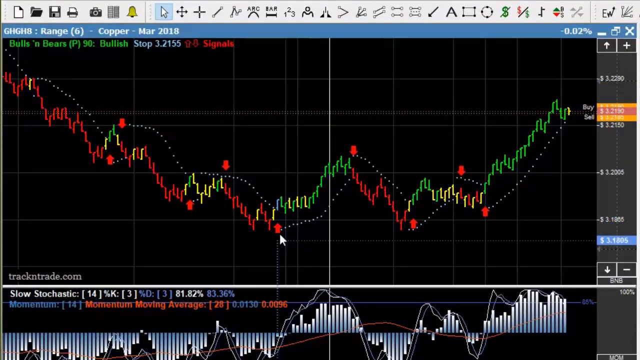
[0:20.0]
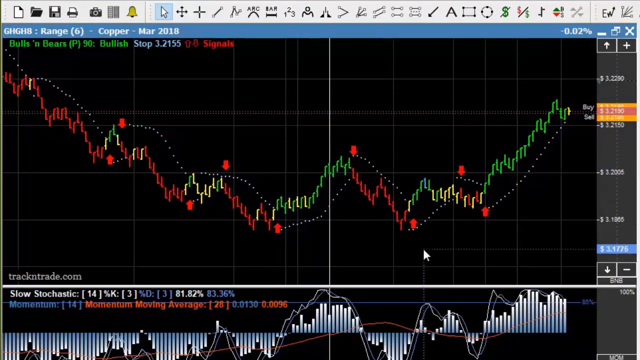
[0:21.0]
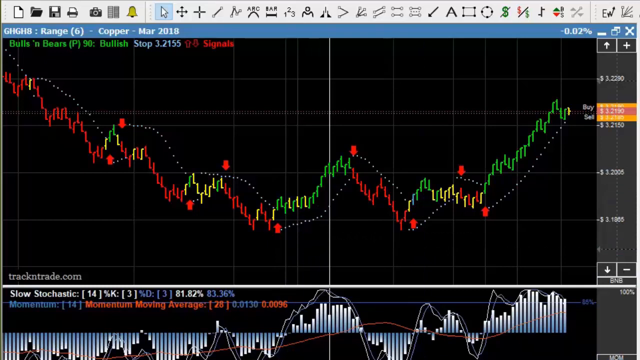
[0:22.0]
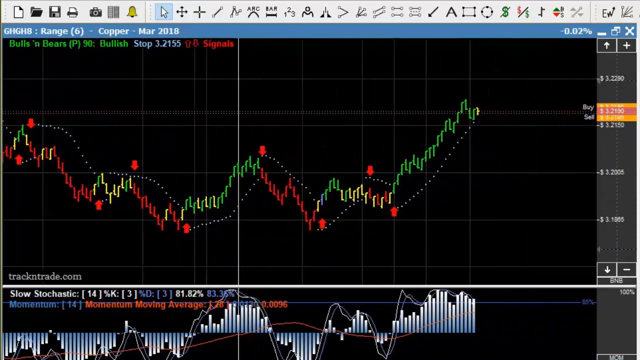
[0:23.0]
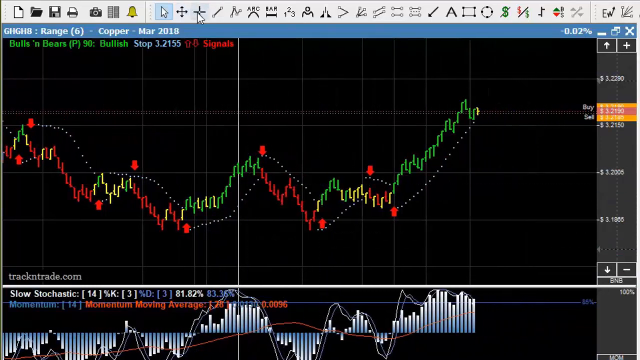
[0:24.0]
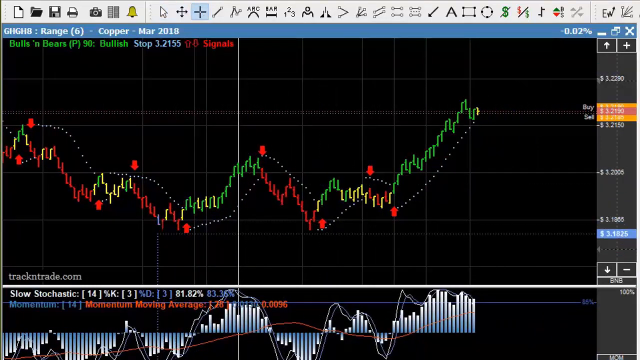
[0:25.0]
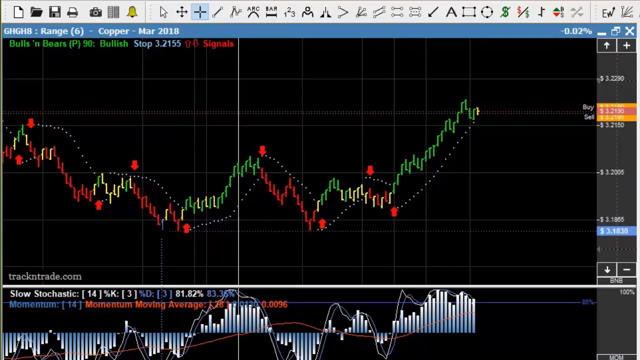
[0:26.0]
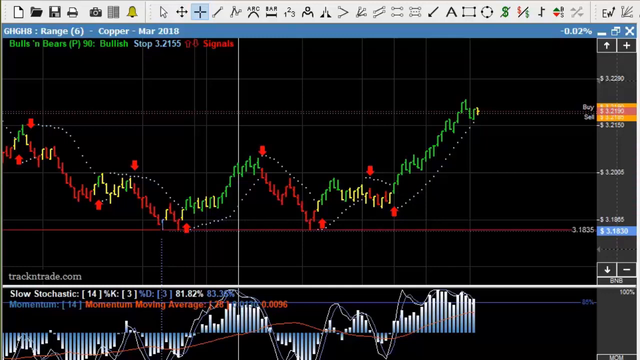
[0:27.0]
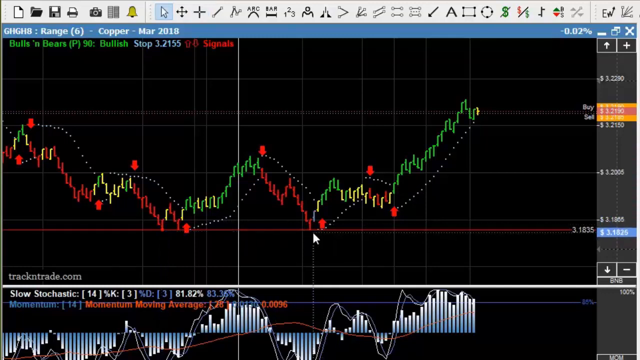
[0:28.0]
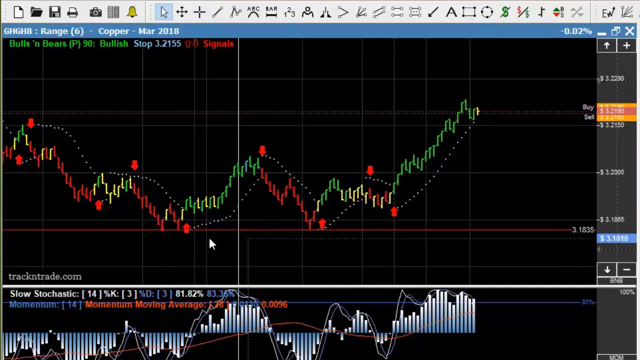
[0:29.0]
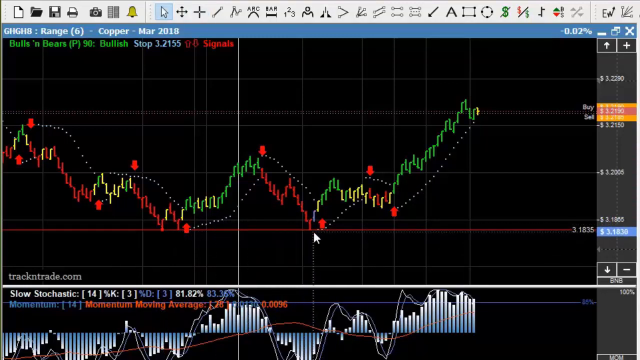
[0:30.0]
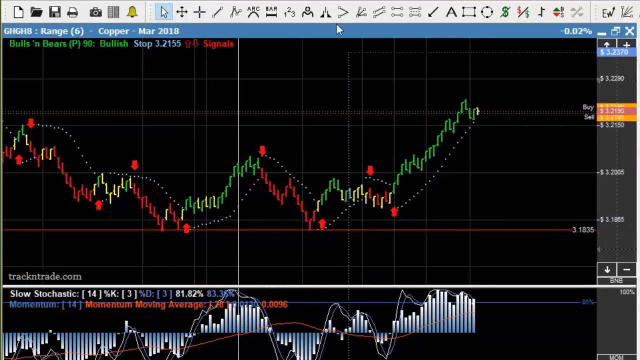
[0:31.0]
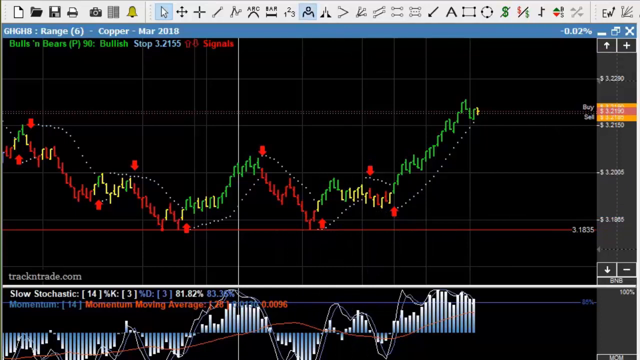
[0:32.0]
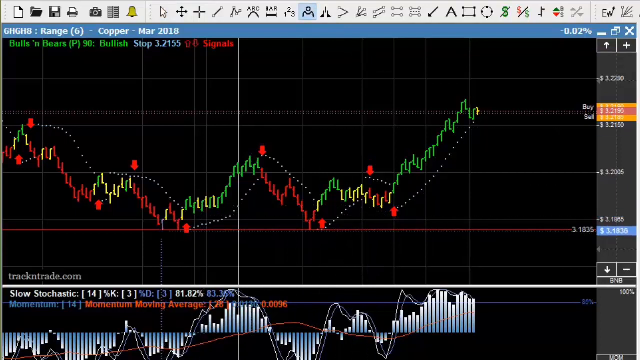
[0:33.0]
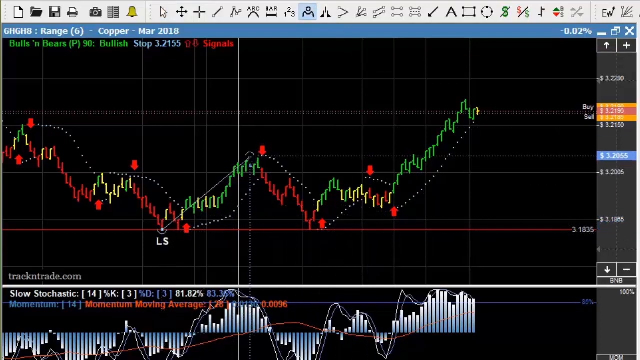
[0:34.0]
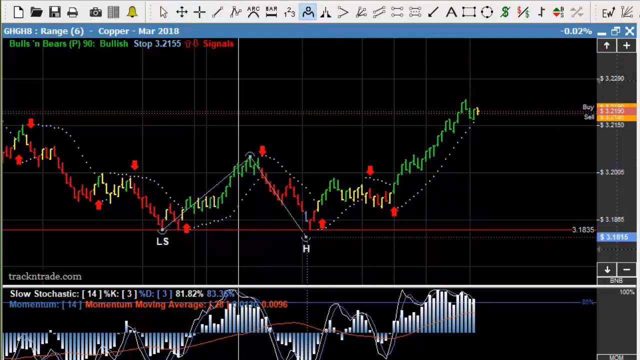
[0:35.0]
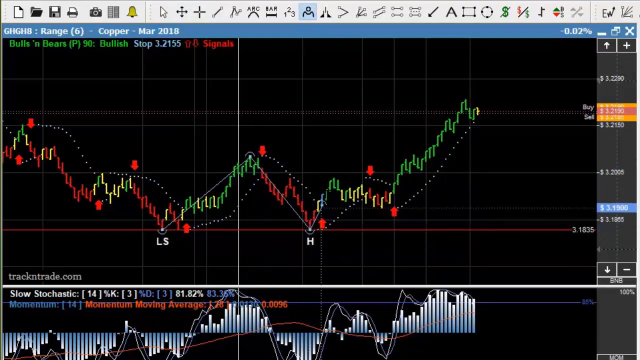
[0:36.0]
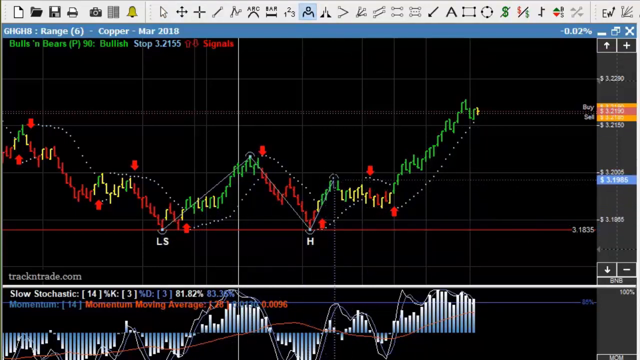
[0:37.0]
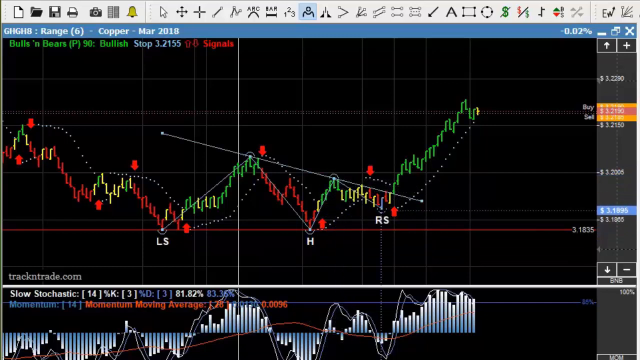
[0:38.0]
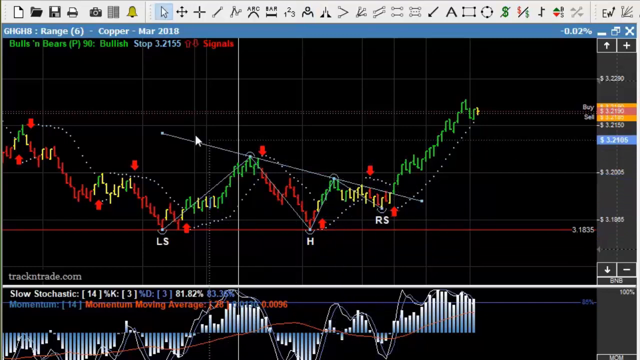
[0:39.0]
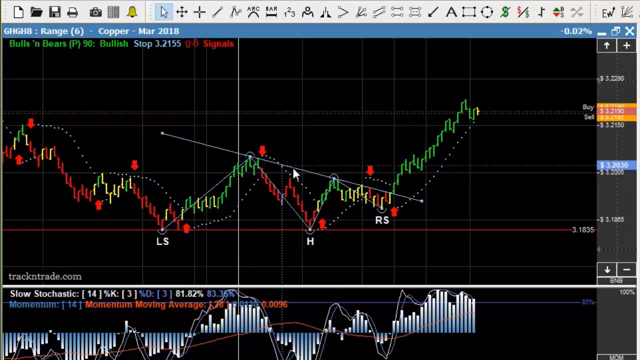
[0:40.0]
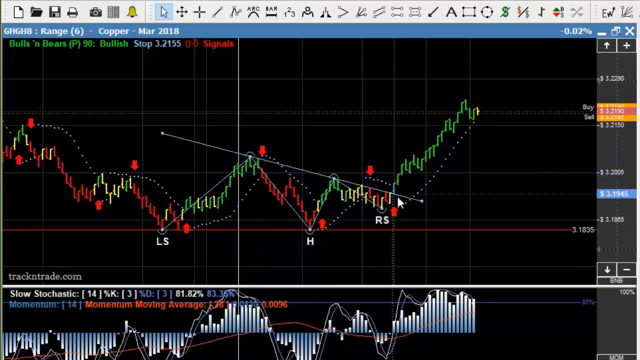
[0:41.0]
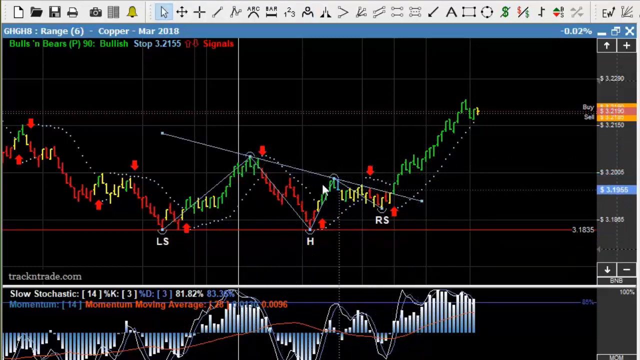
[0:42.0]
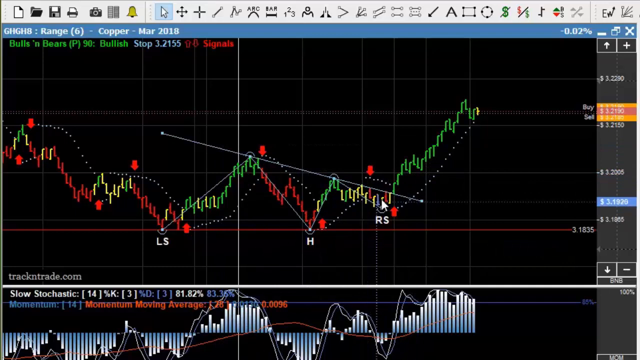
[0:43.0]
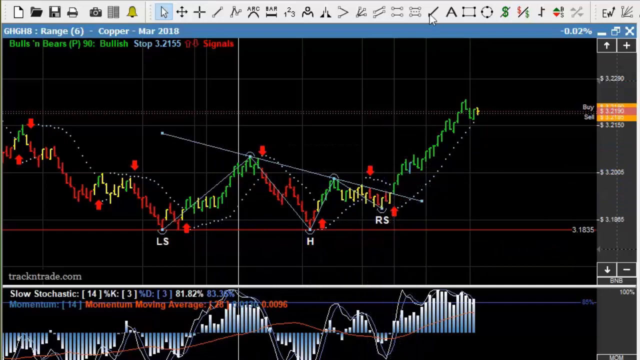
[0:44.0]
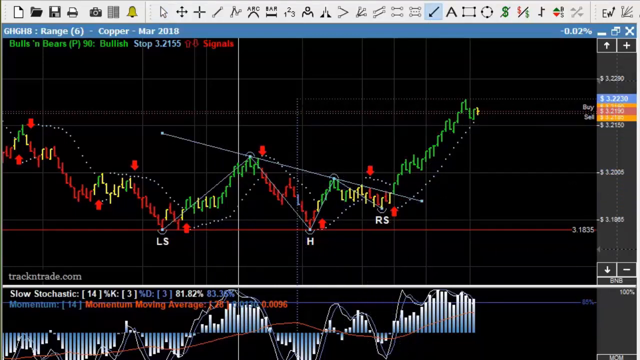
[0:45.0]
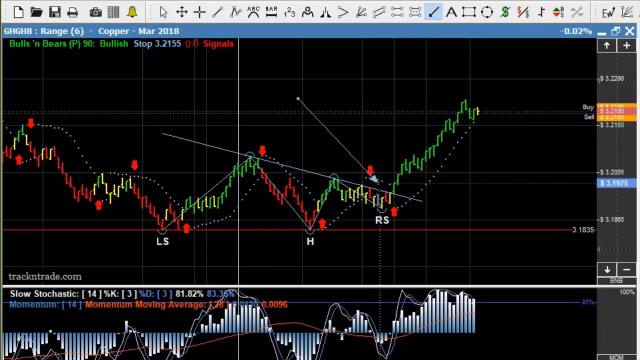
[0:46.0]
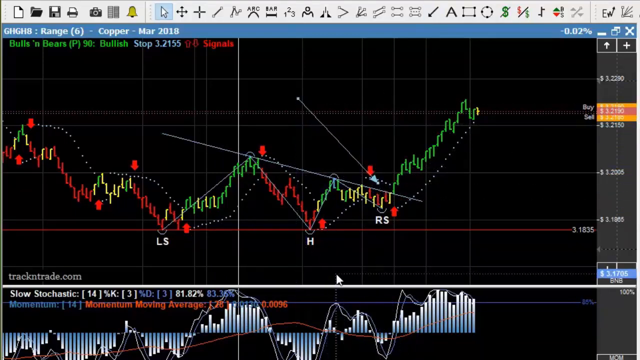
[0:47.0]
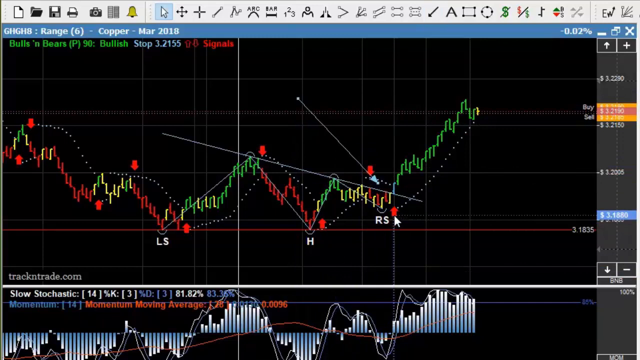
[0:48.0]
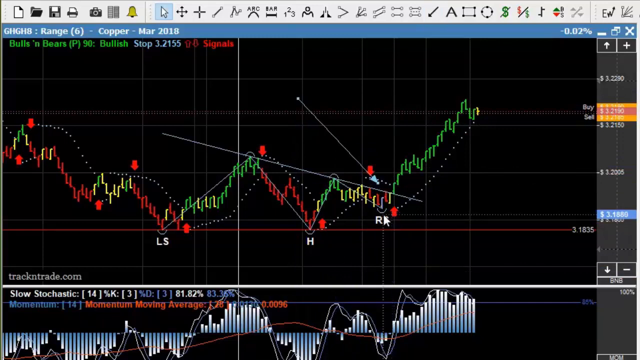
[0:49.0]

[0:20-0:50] On the computer screen, the focus is mostly on the top graph, labeled "copper, March 2018" with "bulls and bears," and text indicating it is more bullish. There is a lot of red as the line goes down, then green and yellow as it goes up, red seemingly going down again, and then green and yellow coming up. Below is a bar graph that is now harder to see. As the cursor moves, a blue element off to the side moves completely with it. The cursor clicks on something above the 2018 and keeps moving upward. "LS" appears, and a line is drawn up toward what seems to be an "H." Another line goes down to a baseline at 3.1835, showing an H again, then another line goes back up. A line is made for an "RS," followed by a downward diagonal line. The cursor moves along a white line, and then a line is drawn somewhere near the top black area, pointing more toward the RS.